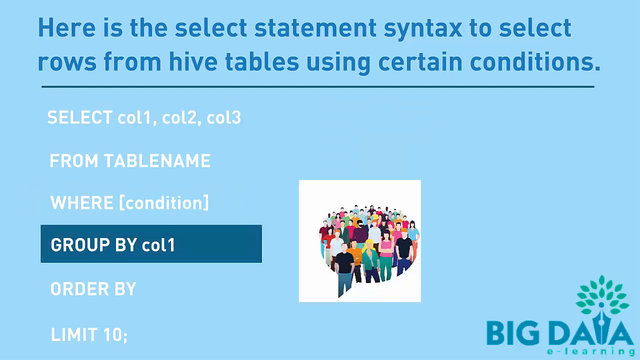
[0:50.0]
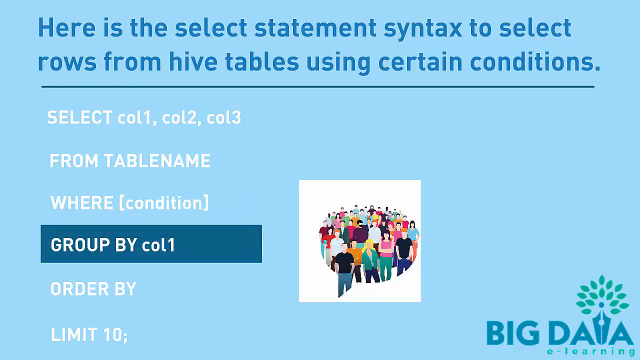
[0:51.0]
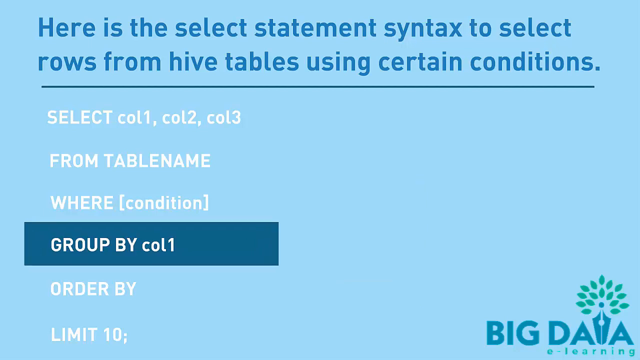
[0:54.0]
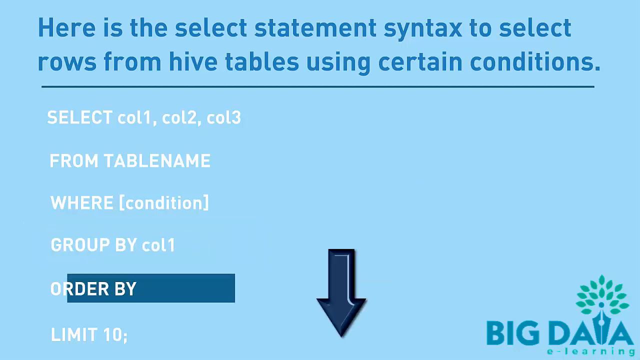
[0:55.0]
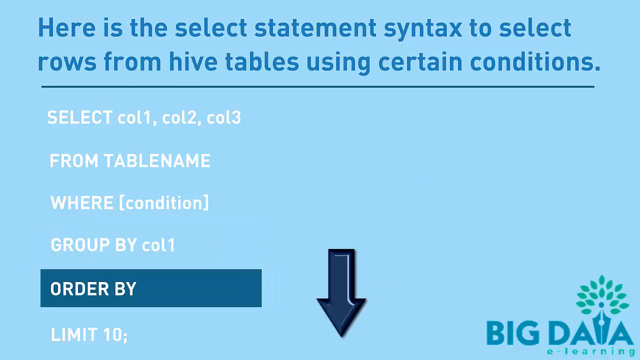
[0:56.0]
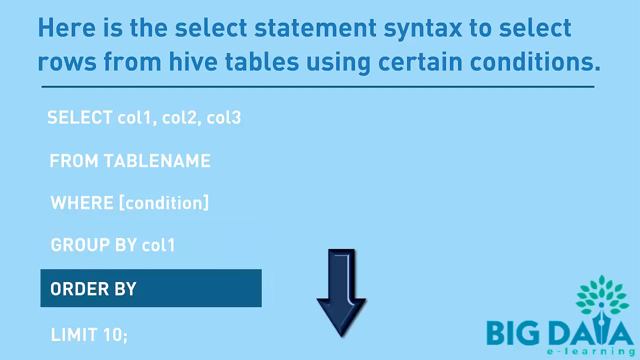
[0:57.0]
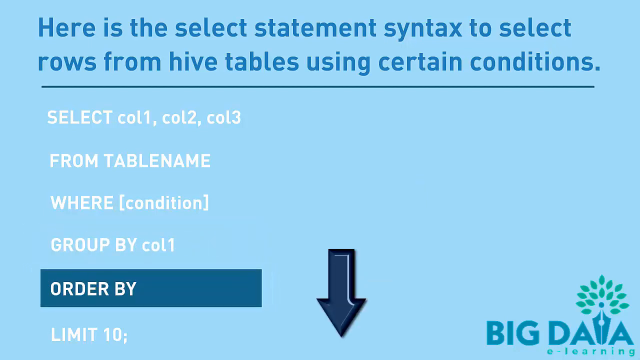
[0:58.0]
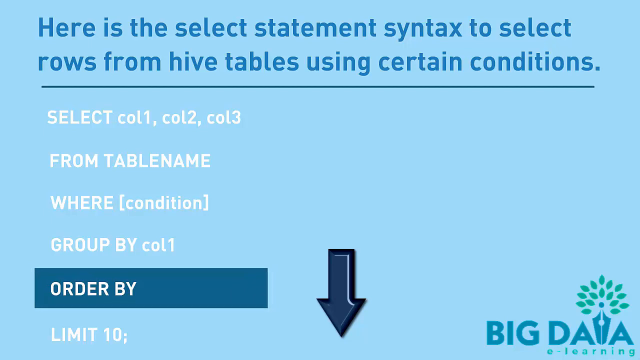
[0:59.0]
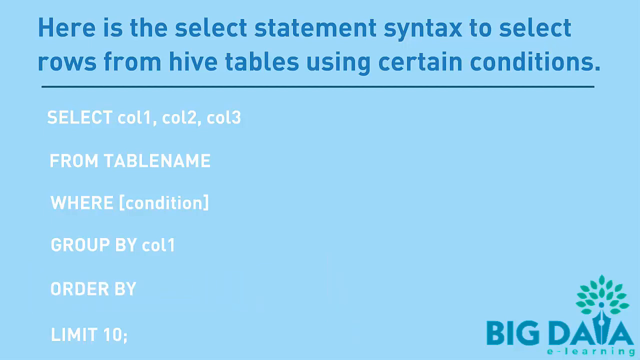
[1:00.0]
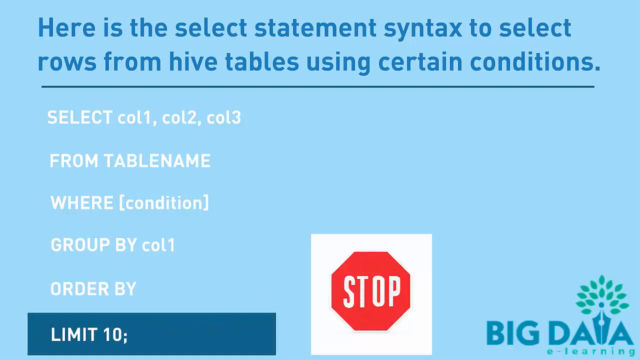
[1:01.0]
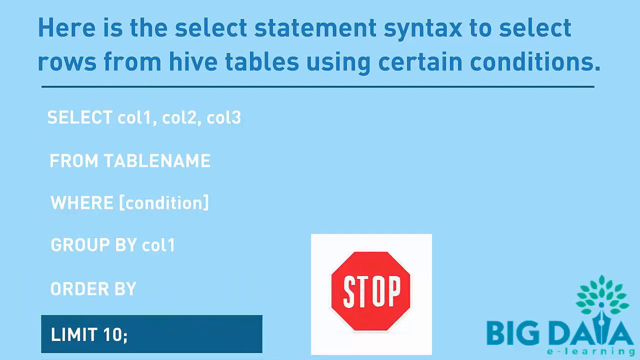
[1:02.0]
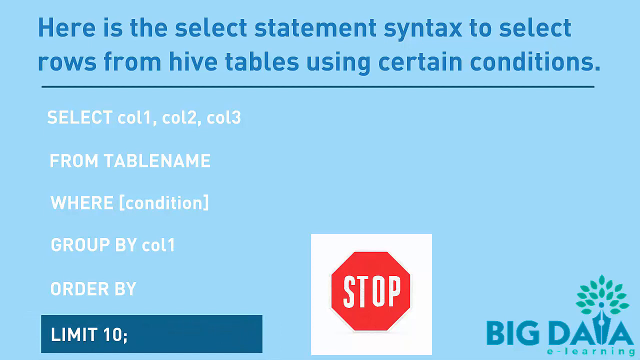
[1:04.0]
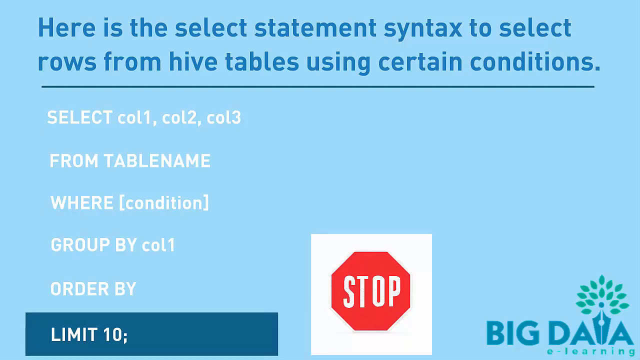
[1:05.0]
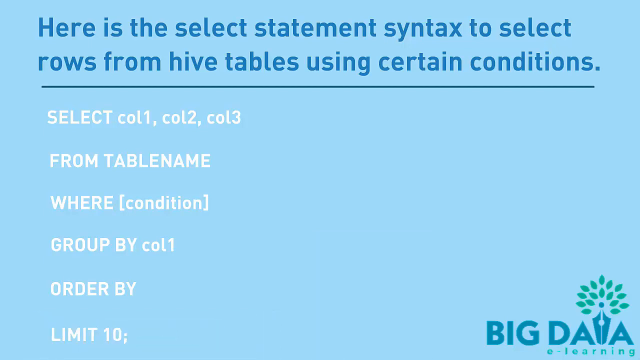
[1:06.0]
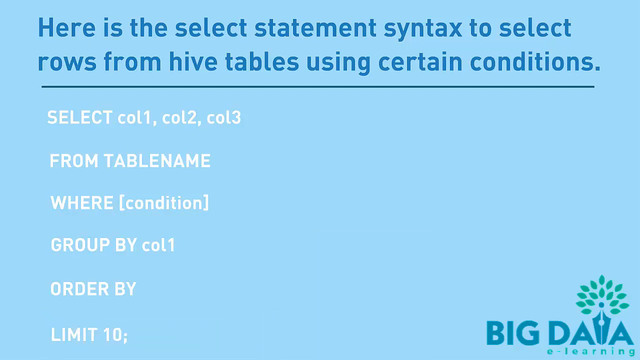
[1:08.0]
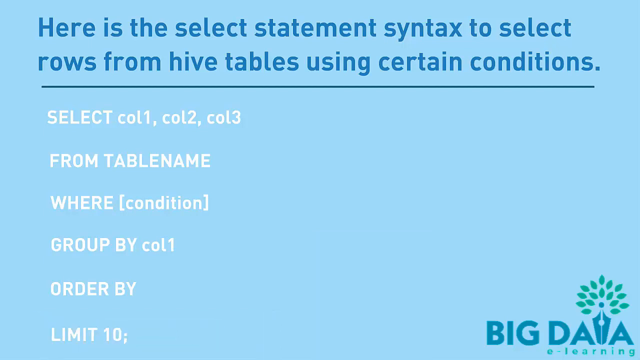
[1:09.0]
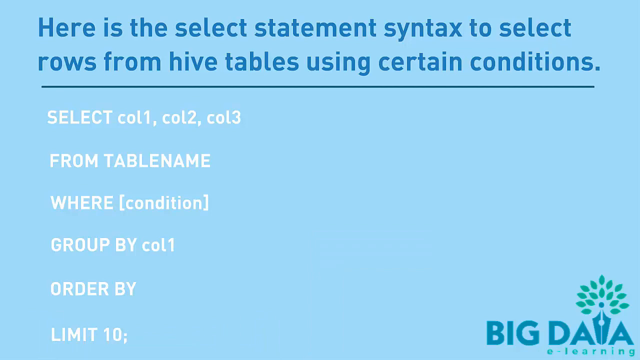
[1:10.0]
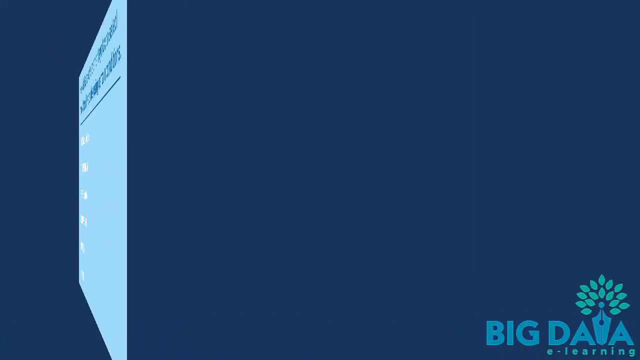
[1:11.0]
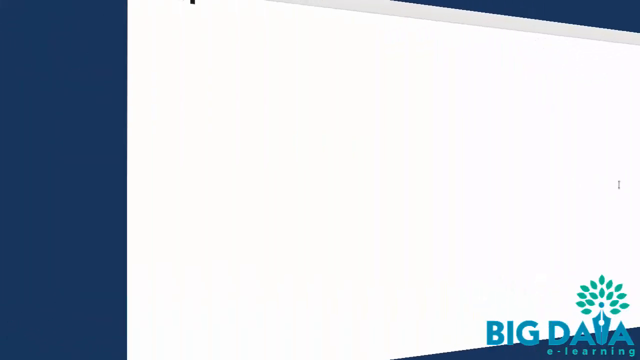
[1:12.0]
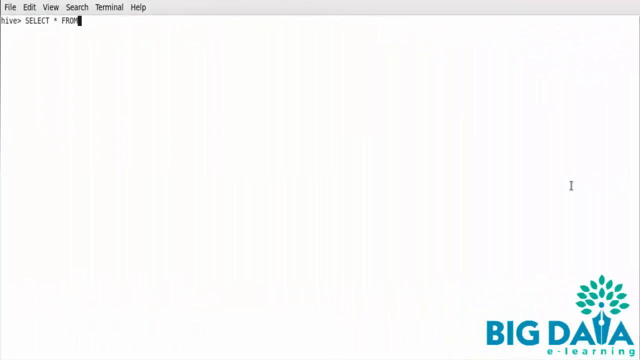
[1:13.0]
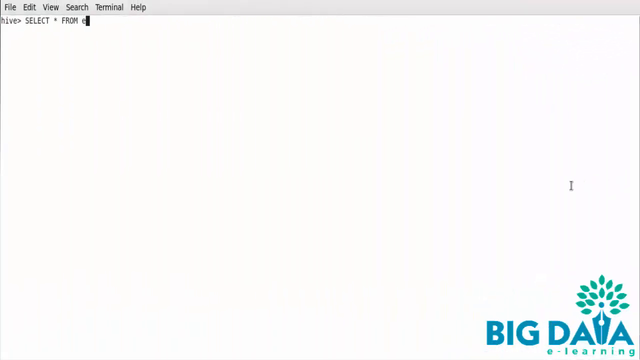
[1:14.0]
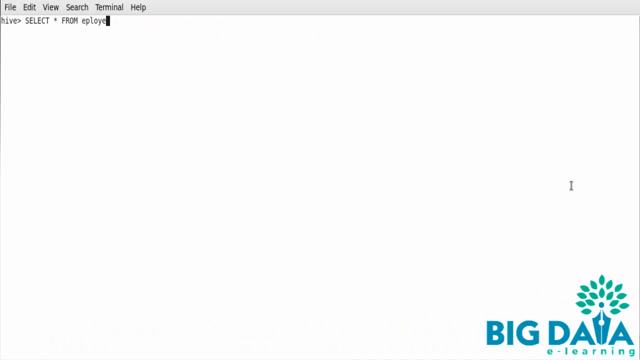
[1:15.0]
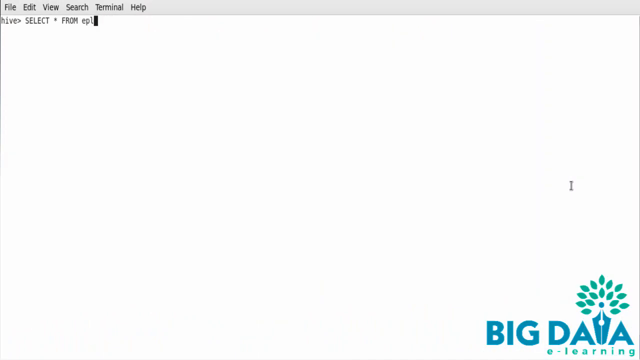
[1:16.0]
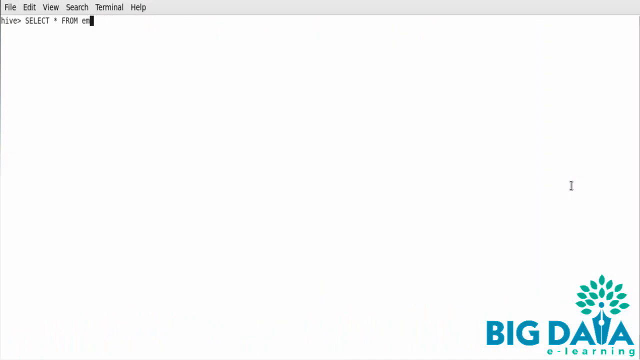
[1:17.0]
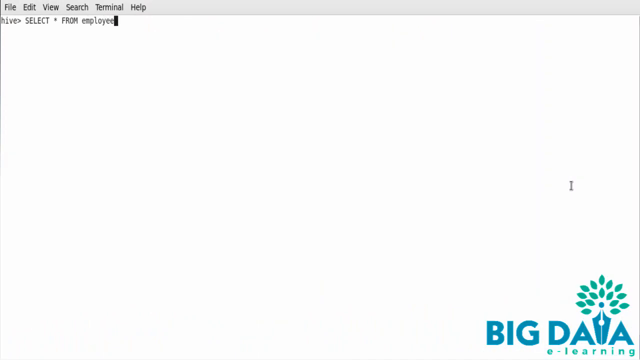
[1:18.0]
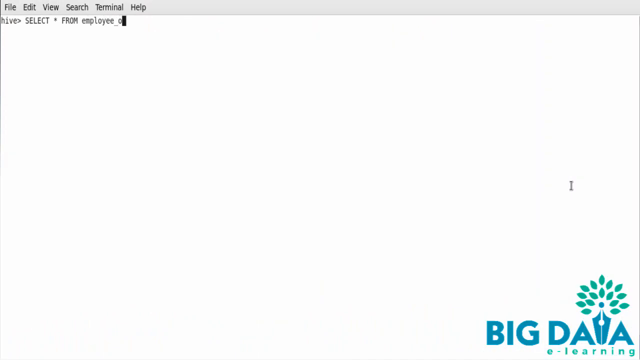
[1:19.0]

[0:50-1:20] The screen with the text "Here is the select statement syntax to select rows from hive tables using certain conditions" at the top lists the lines "SELECT col1, col2, col3", "FROM TABLENAME", "WHERE (condition)", "GROUP BY col1", "ORDER BY" and "LIMIT 10". The GROUP BY col1 line is highlighted, with a graphic of a group of people next to it. The graphic of the people fades and the highlighting over the GROUP BY col1 line disappears. The ORDER BY line is then highlighted with a dark blue bar, and a blue arrow pointing downward appears next to it. Finally, the LIMIT 10 line is highlighted in dark blue and a graphic of a stop sign appears next to it. The page then changes to what looks like a computer display with a navigation bar at the top, where someone types lines of script onto a blank white screen. The script at the top reads "Hive" and then "Select From Employee, Org".